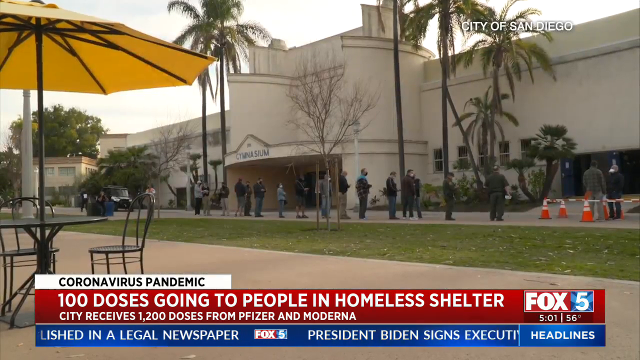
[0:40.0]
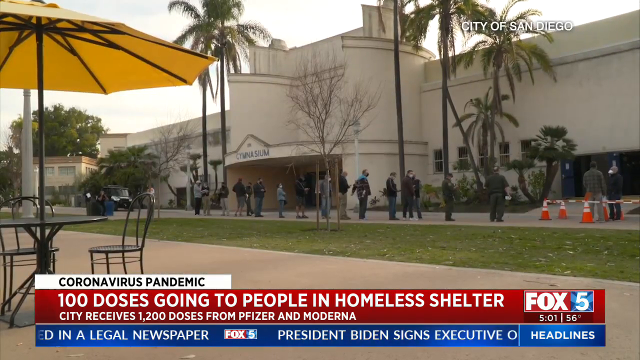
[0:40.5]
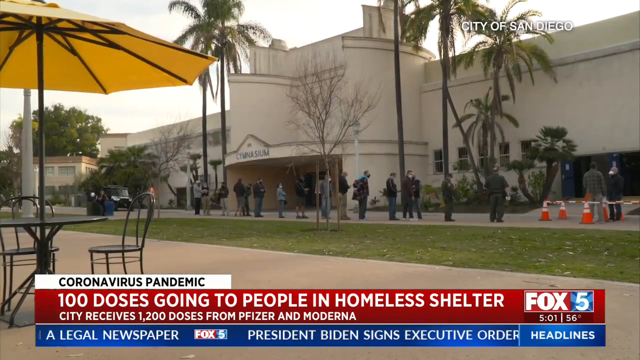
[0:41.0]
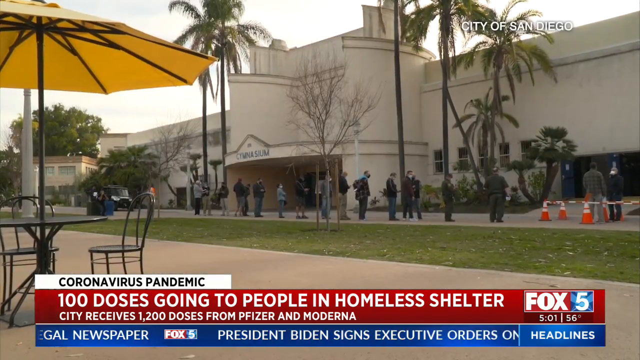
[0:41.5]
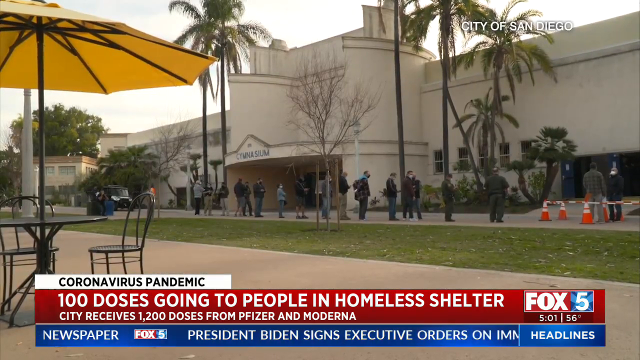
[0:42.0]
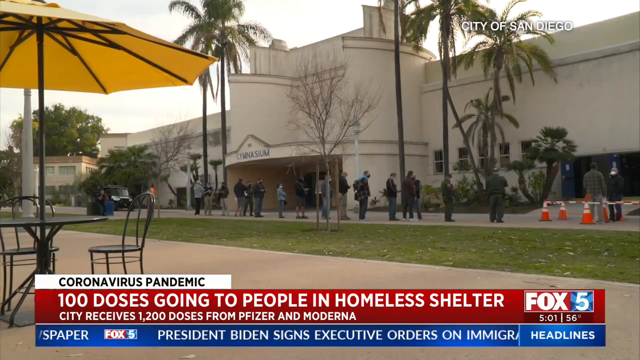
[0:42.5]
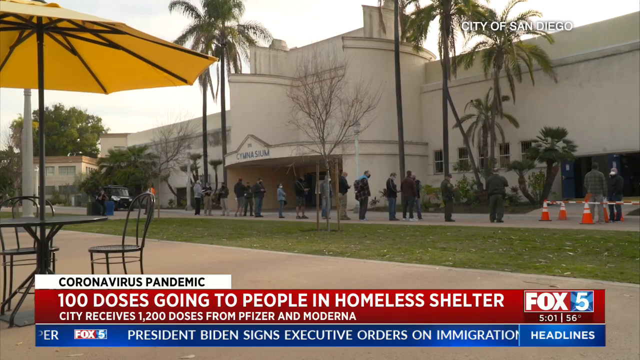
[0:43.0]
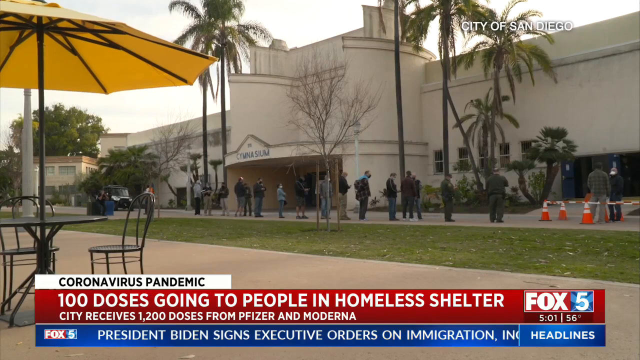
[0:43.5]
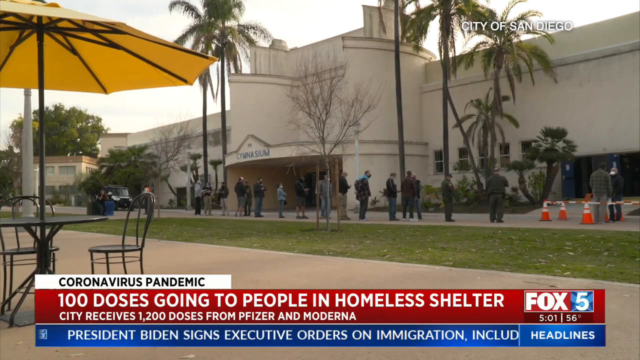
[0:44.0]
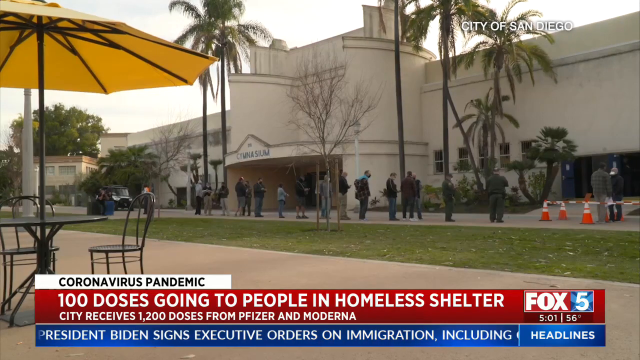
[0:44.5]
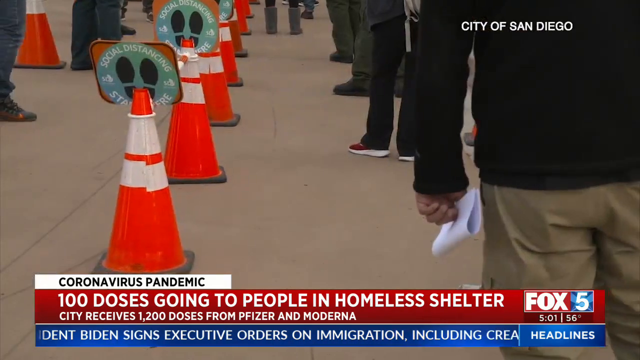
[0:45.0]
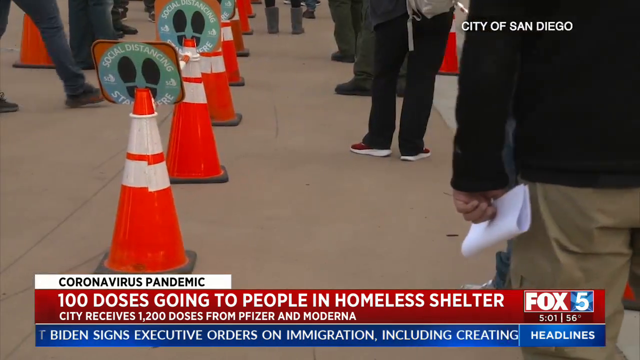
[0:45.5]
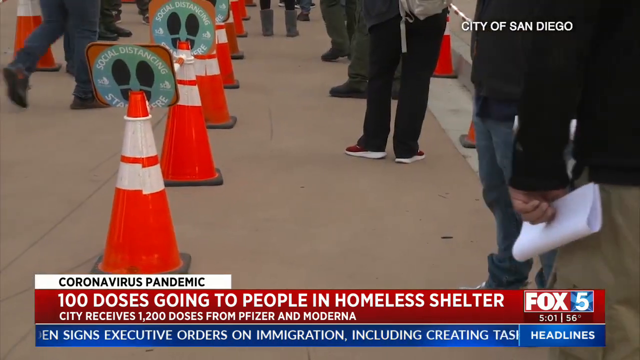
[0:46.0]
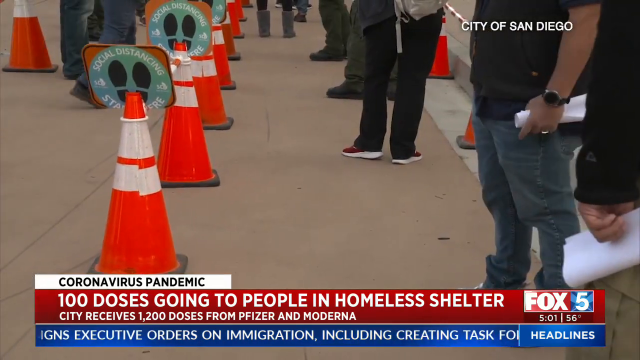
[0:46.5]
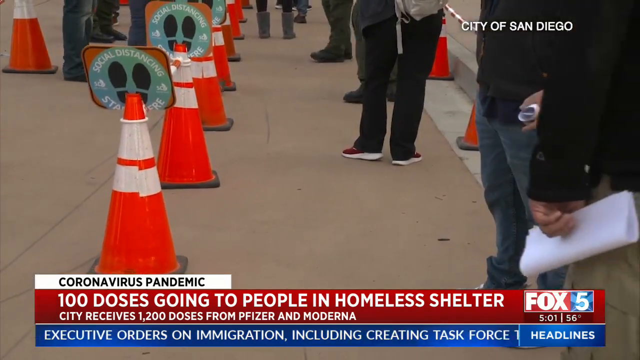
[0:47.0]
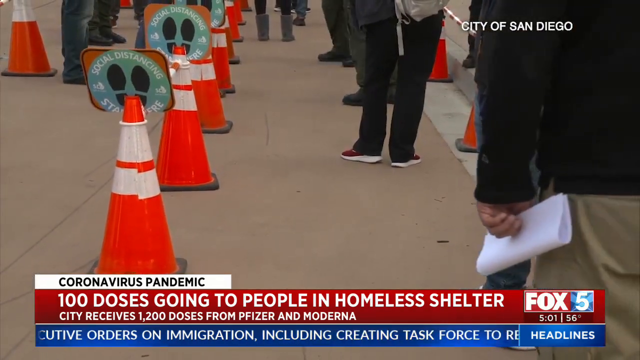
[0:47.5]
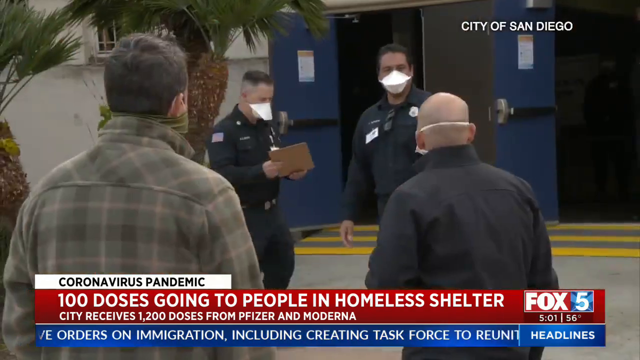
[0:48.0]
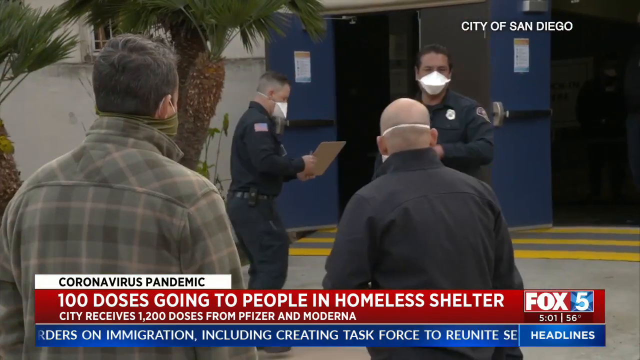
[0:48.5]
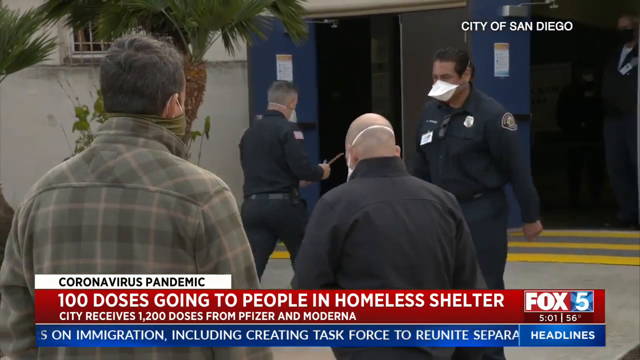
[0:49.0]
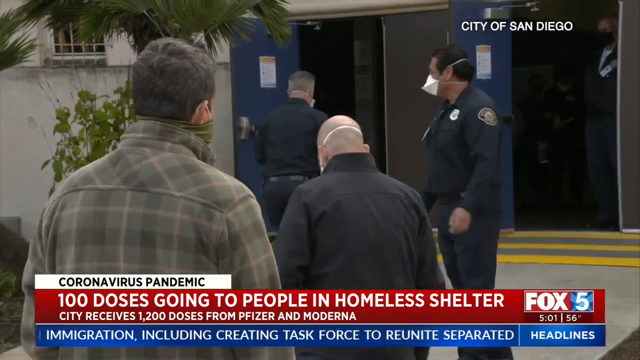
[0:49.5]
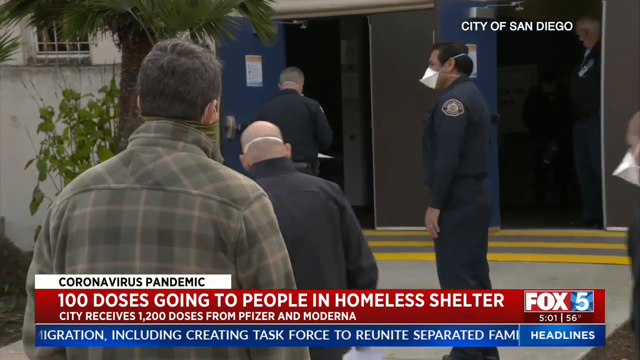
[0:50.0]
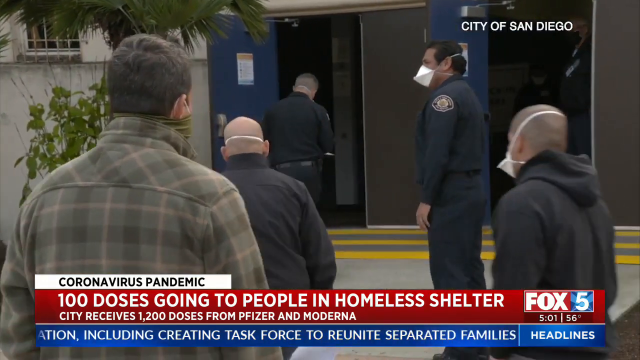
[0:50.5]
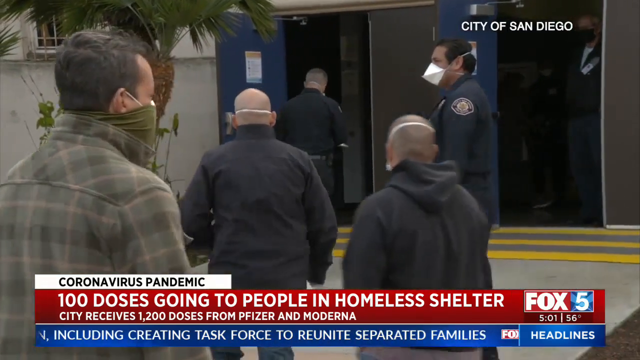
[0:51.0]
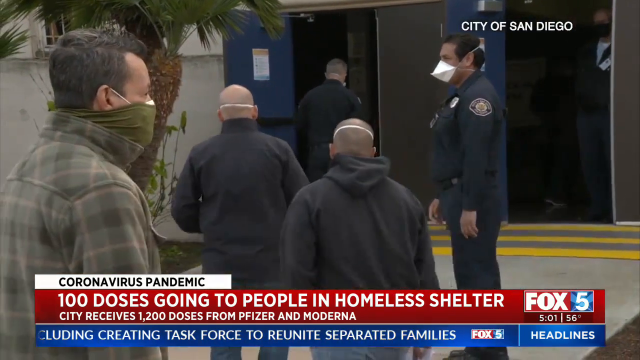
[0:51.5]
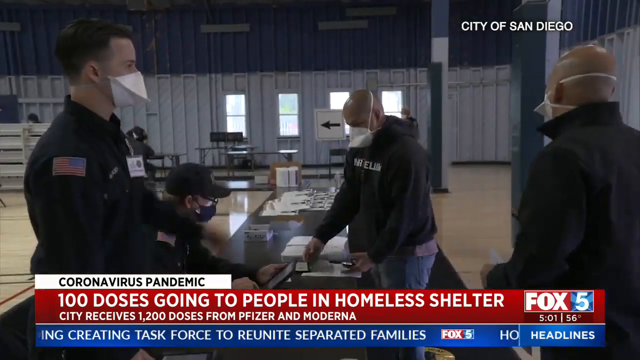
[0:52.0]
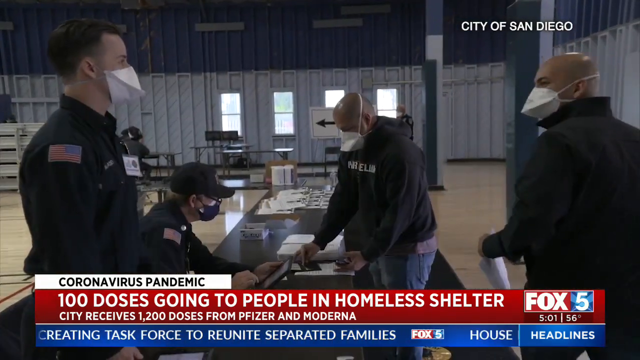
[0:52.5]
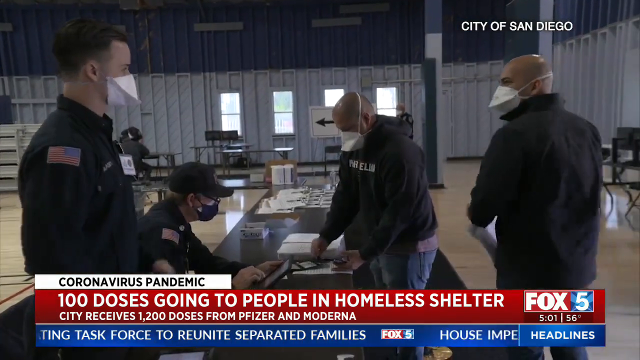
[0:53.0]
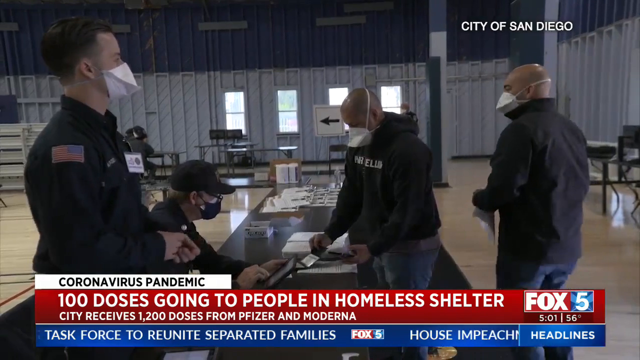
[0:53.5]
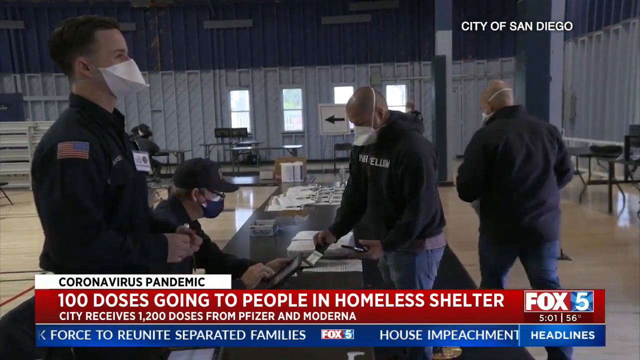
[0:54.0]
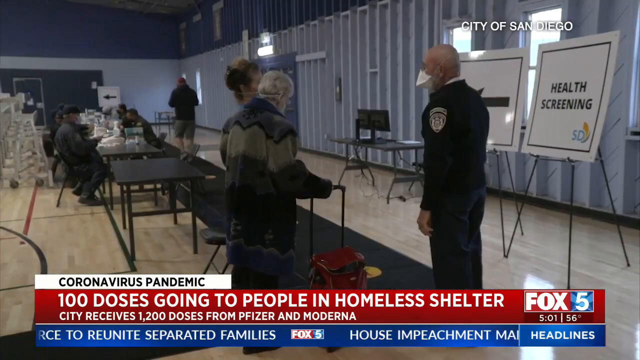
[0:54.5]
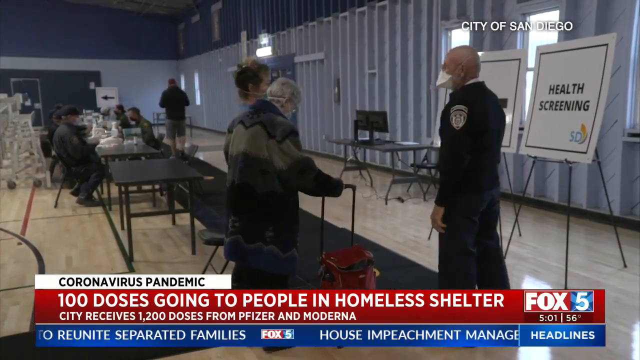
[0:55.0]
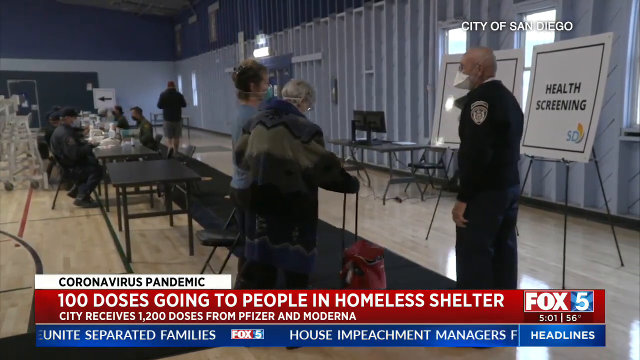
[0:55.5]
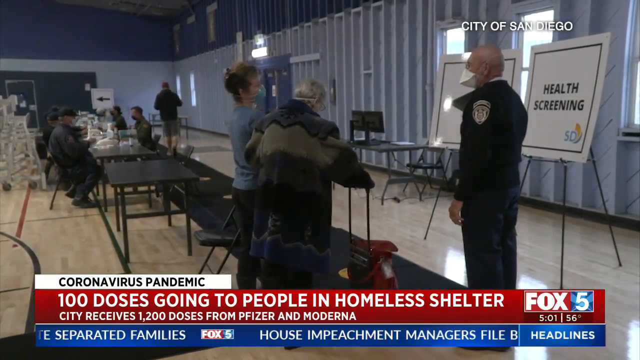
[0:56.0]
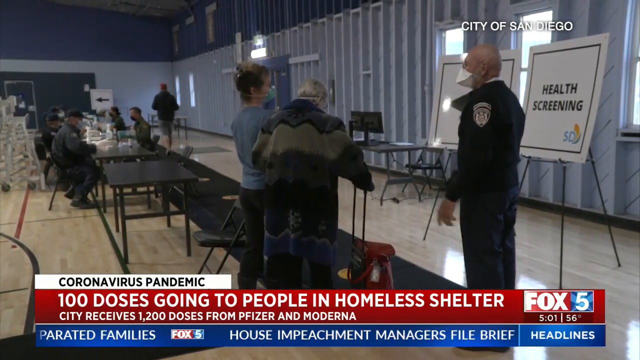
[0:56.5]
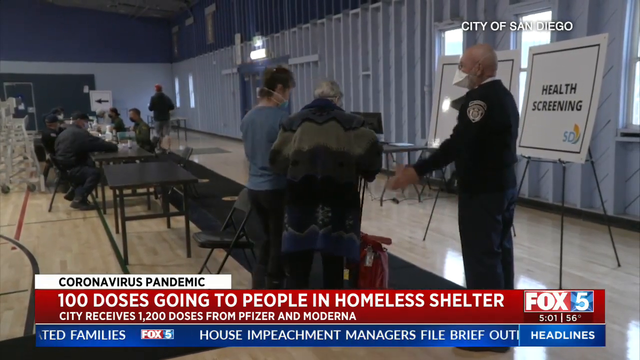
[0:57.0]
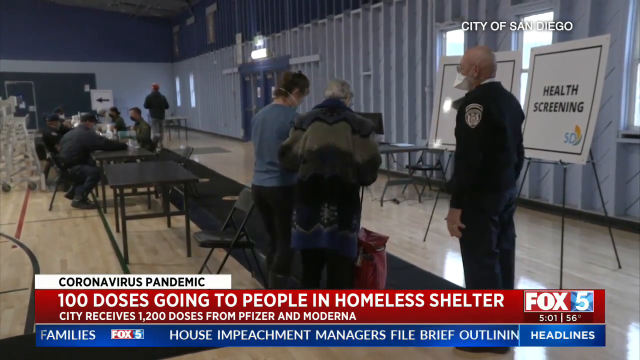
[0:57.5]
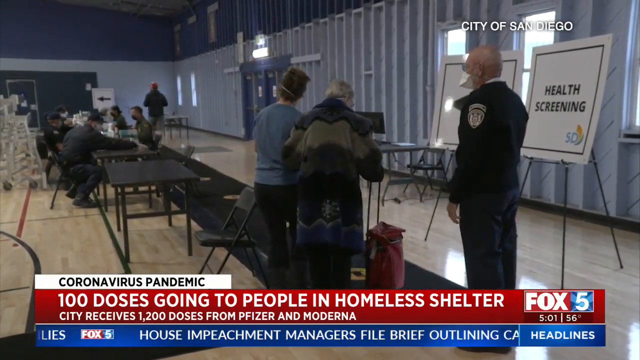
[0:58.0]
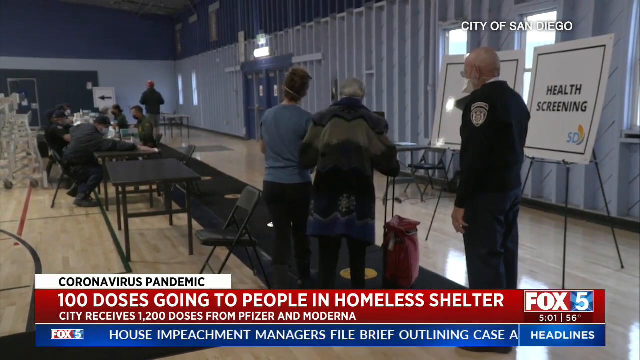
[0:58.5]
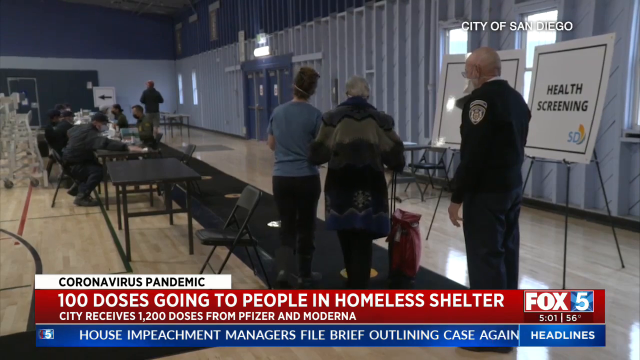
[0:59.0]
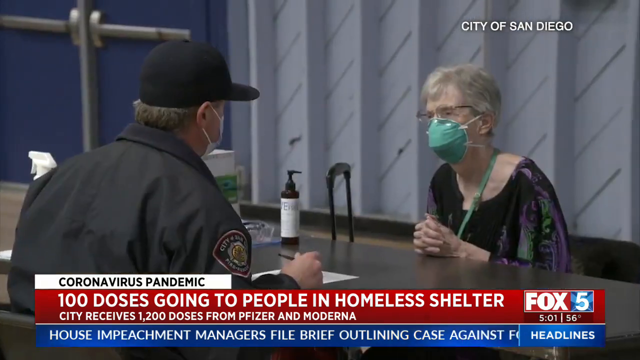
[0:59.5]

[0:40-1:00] Outside the building identified as the city of San Diego, people stand a few feet apart, queuing to enter, probably to get their coronavirus vaccinations. The scene changes to police officials directing these people into the building. Inside, the words "health screening" are visible, and people in the hall welcome those coming in and direct them to the various people stationed inside the facility to offer assistance. An elderly white woman wearing a face mask, who has come in for assistance, is at a table with a police official inside the hall.